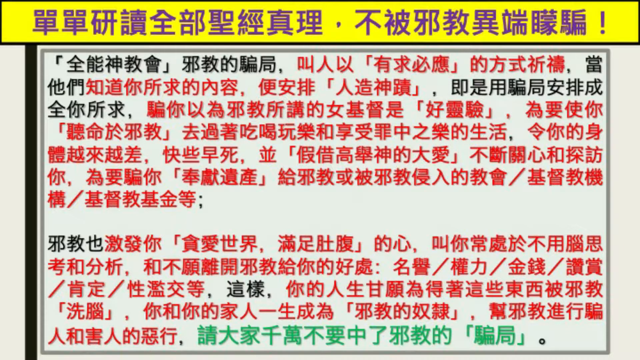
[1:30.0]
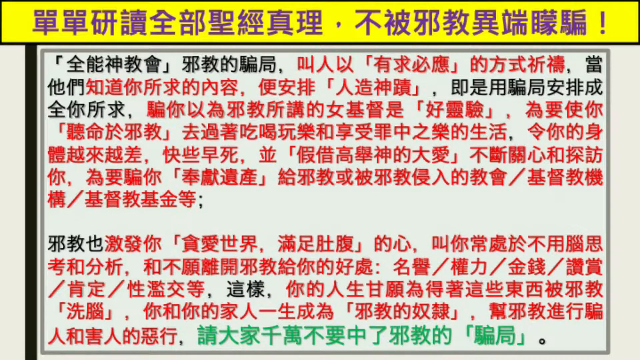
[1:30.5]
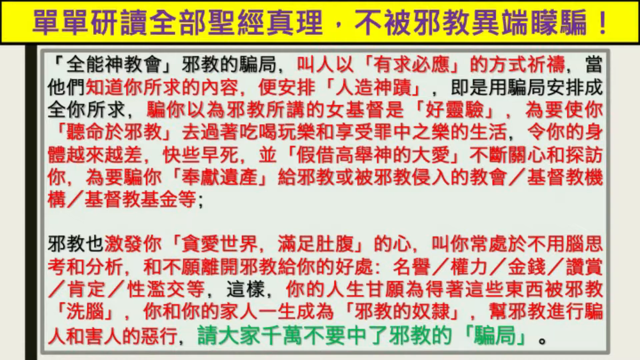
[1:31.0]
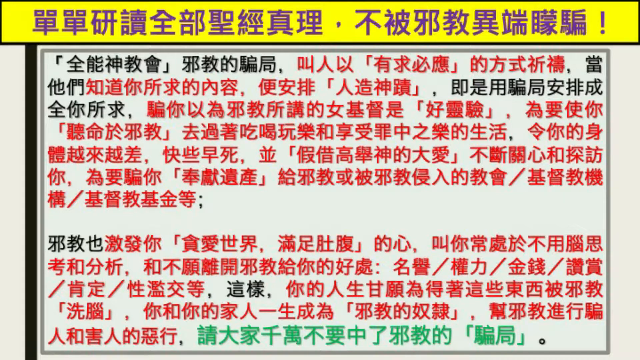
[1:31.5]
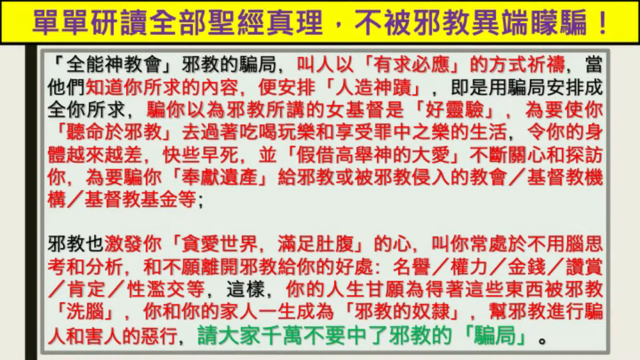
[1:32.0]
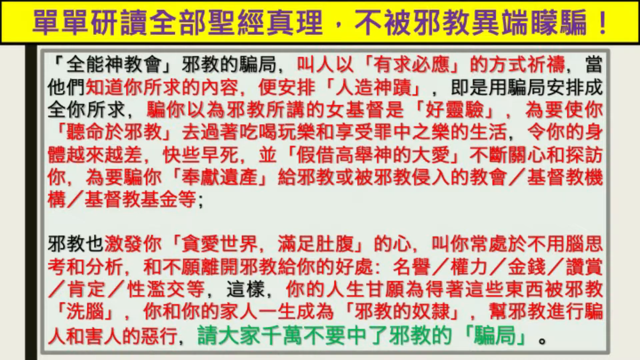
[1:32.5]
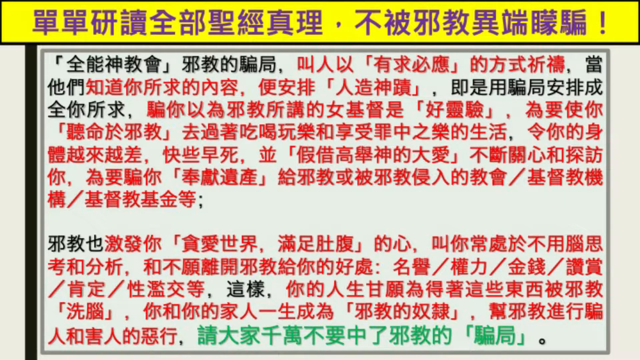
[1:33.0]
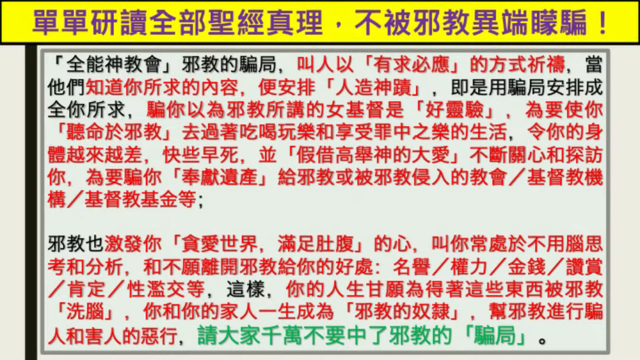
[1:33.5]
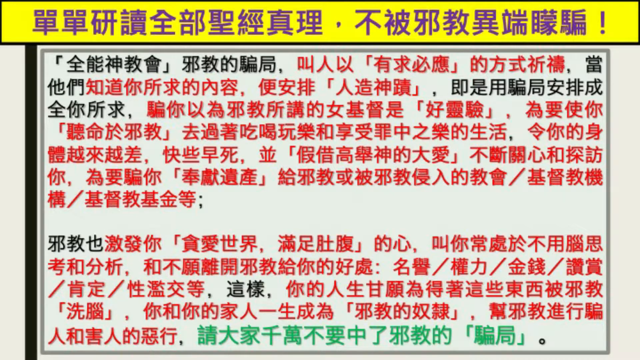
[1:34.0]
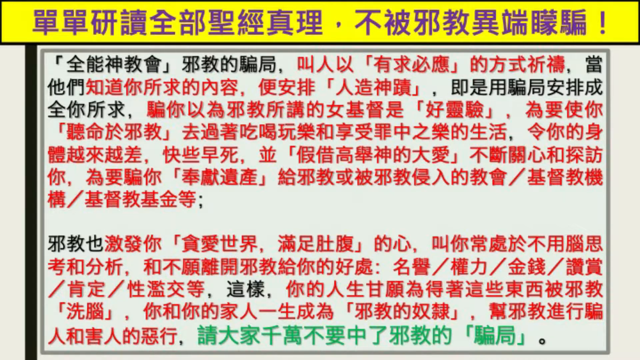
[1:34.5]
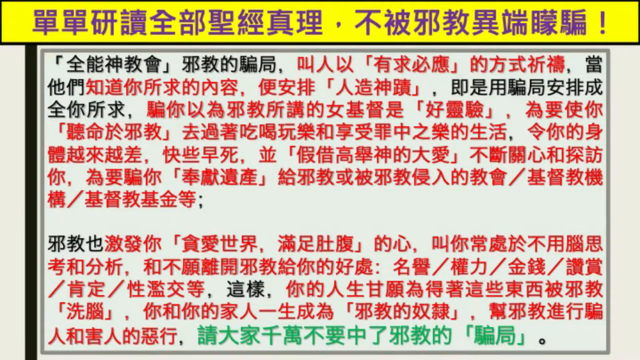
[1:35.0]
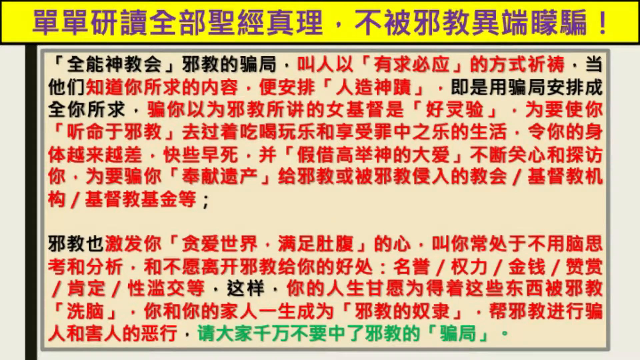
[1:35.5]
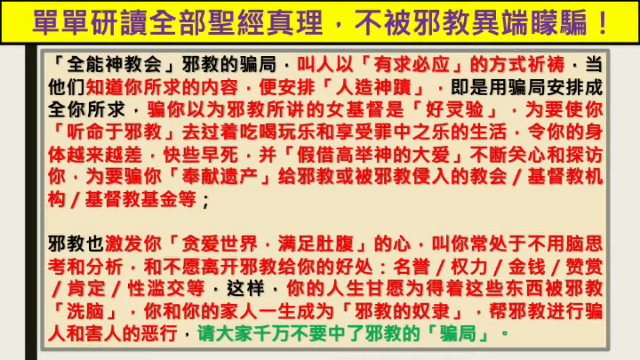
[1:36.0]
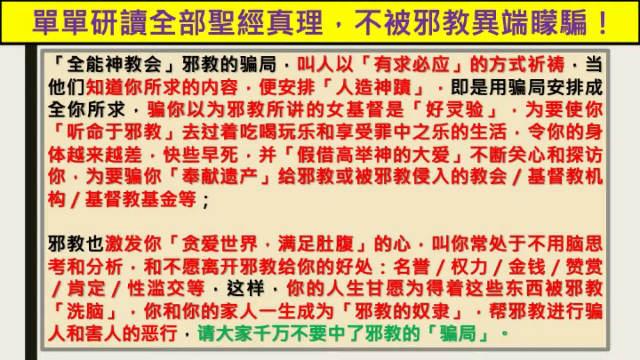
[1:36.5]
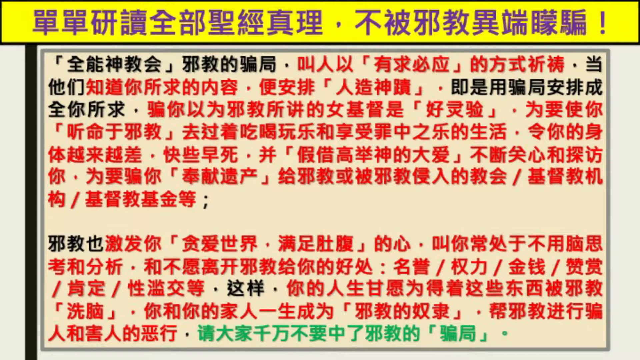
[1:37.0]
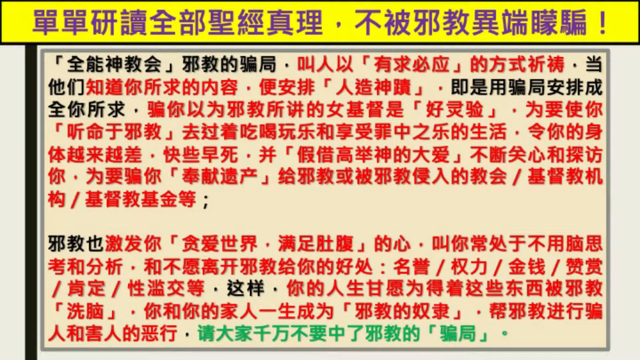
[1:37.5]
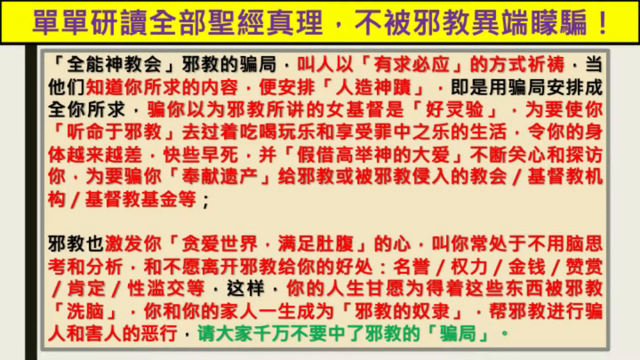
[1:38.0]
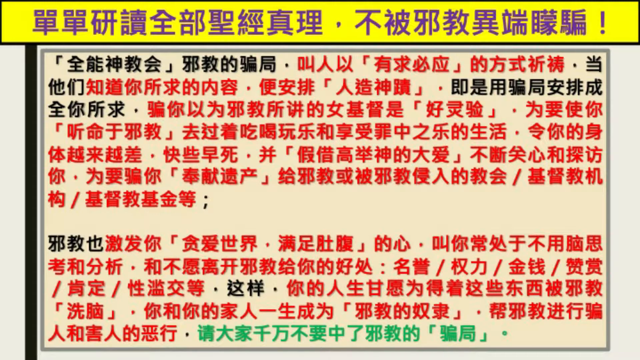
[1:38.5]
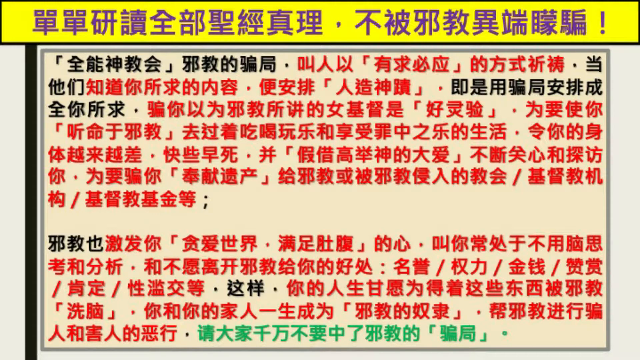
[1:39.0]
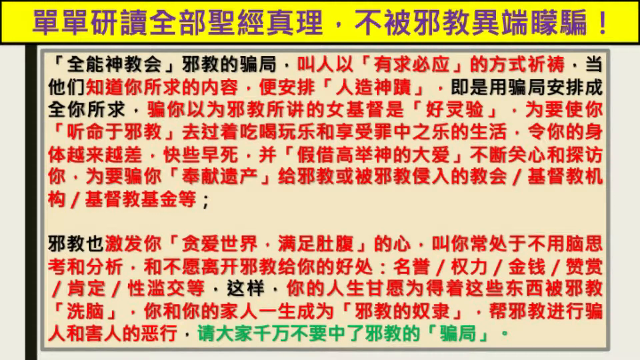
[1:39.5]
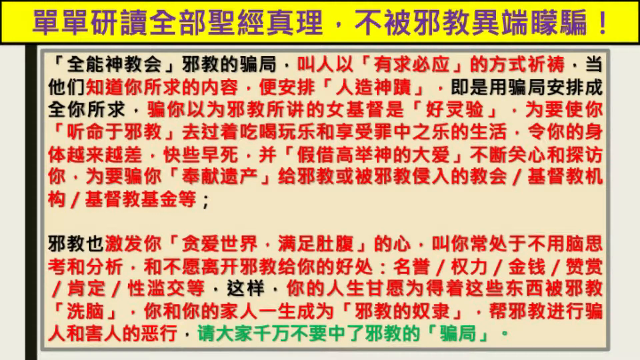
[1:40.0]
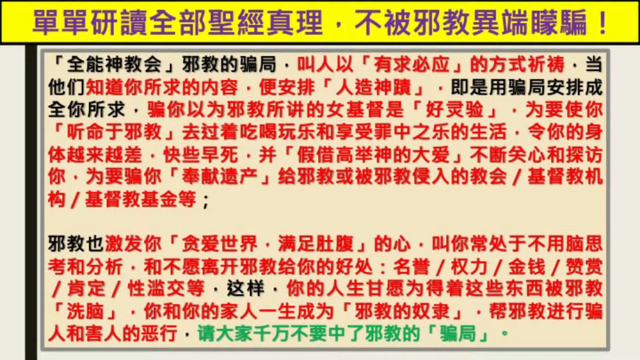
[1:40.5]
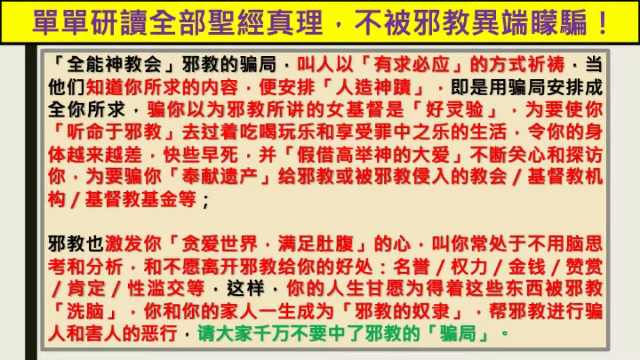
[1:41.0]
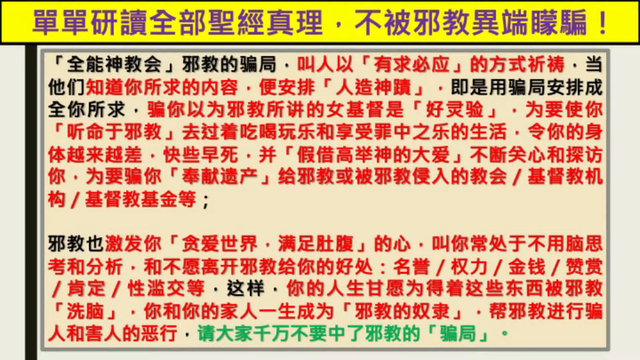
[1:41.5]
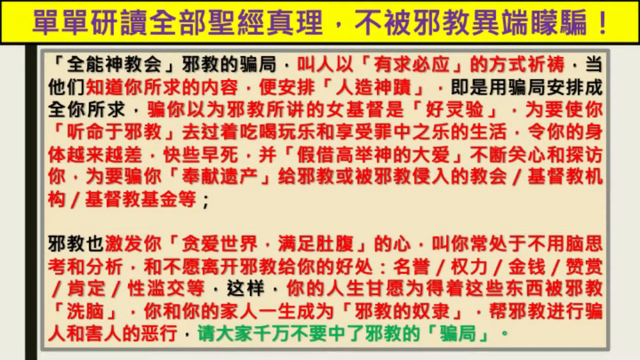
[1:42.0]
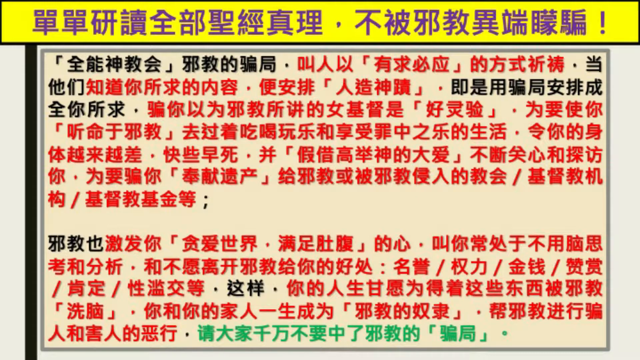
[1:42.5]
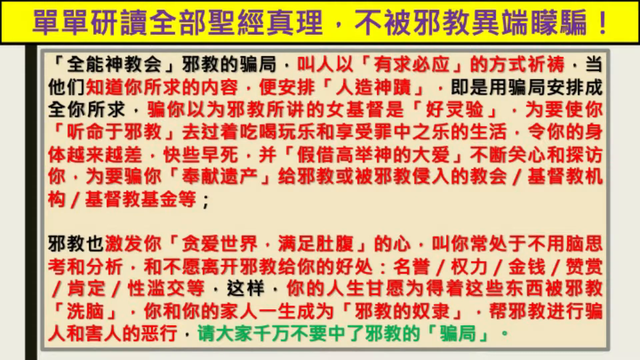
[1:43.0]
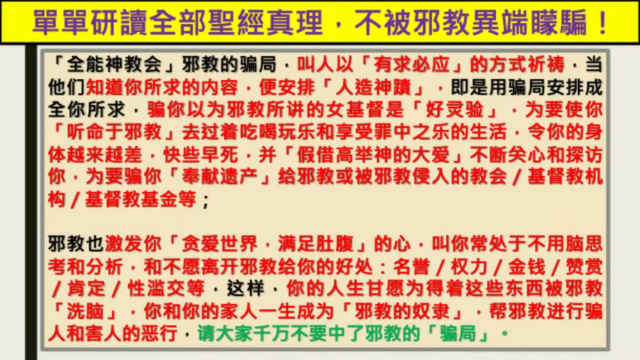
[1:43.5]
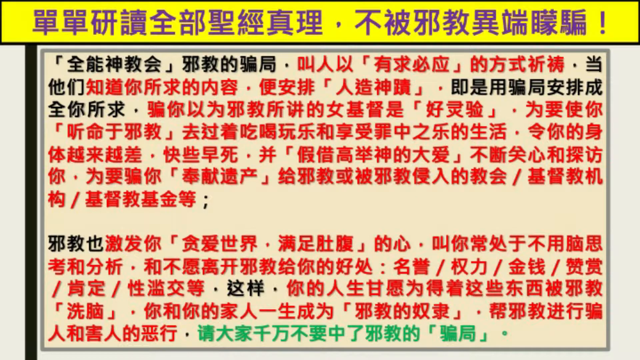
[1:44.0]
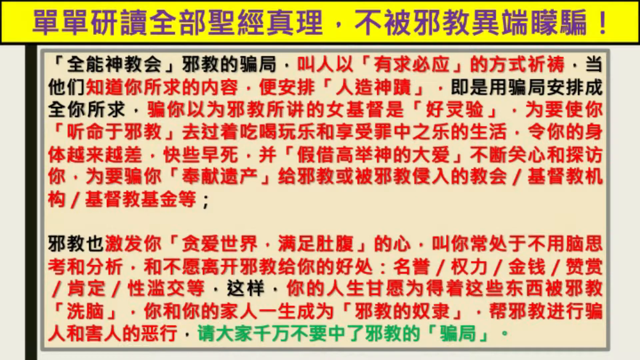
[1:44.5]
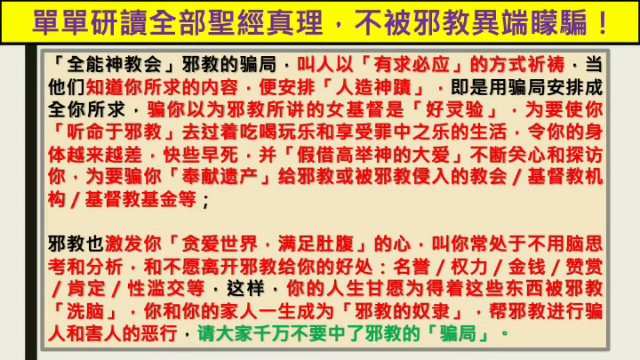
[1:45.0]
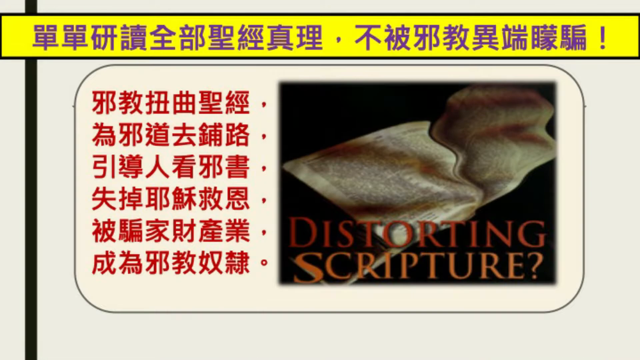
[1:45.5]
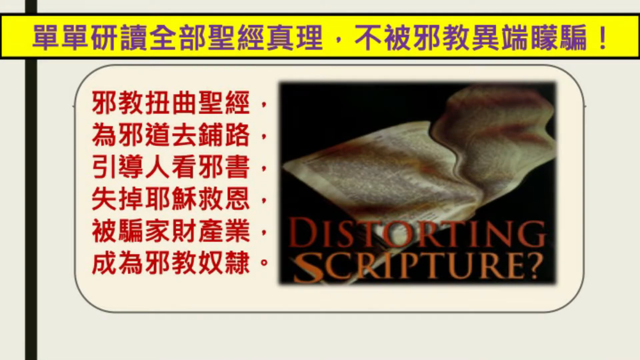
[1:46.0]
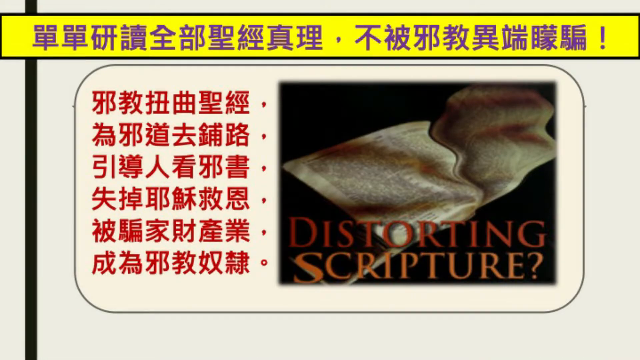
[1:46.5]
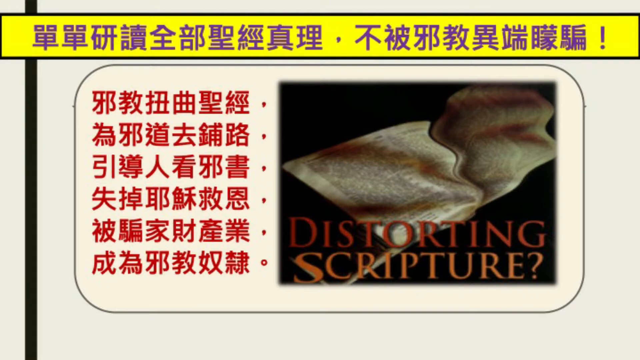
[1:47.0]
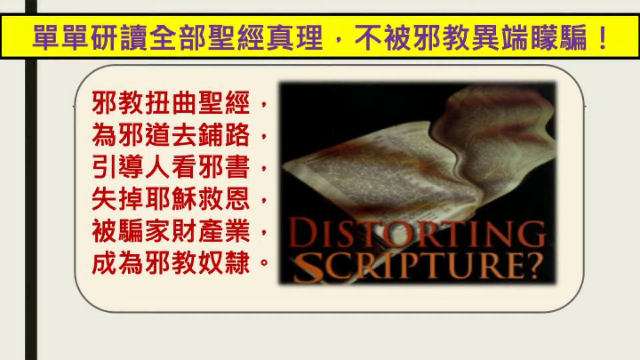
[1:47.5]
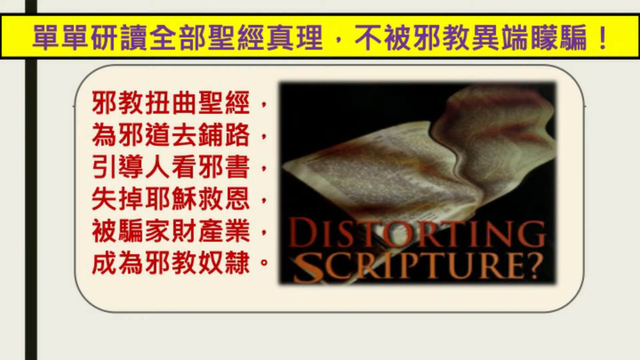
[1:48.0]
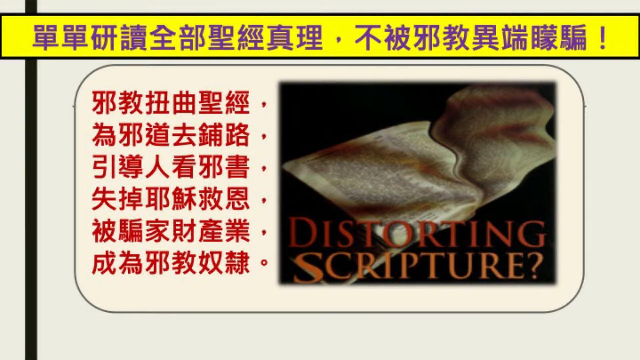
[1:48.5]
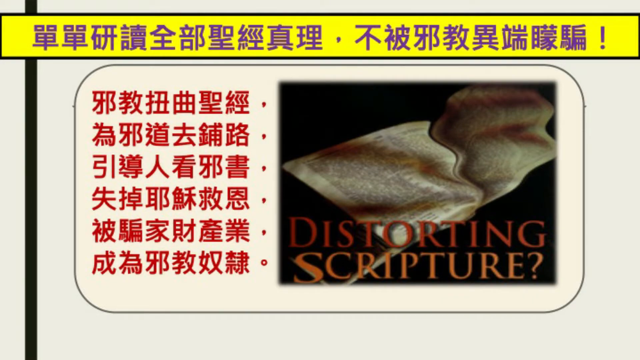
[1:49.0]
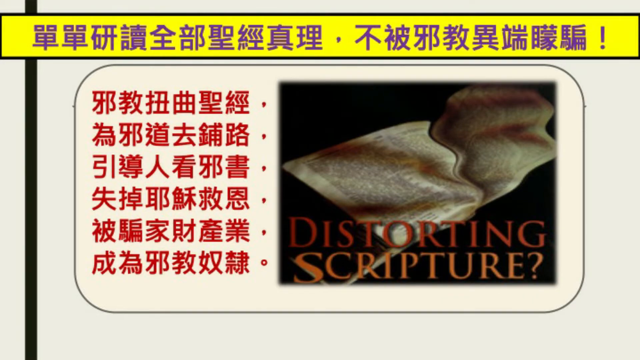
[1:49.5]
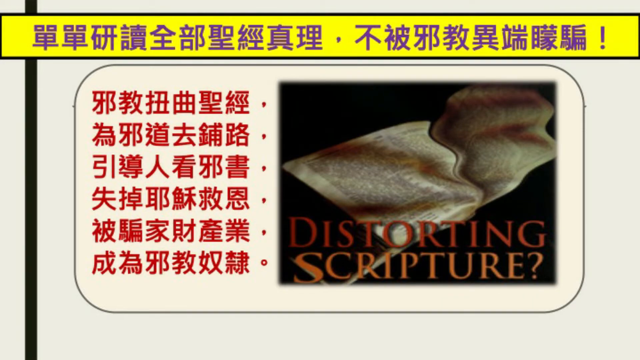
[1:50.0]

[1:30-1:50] The yellow banner with purple lettering is across the top, with writing in black and red below it: two paragraphs that each start in black, change to red and change back to black, on a white page background. The next page has black and red lettering on a beige background, again under the yellow banner with purple. The following page has the yellow banner with purple on top and underneath it a beige box with red writing in six rows; to its right, the Bible is open to a page with the words "distorting scripture" in red and orange. The next page has the yellow banner and black and red lettering on a white background, with black trim around the edge.